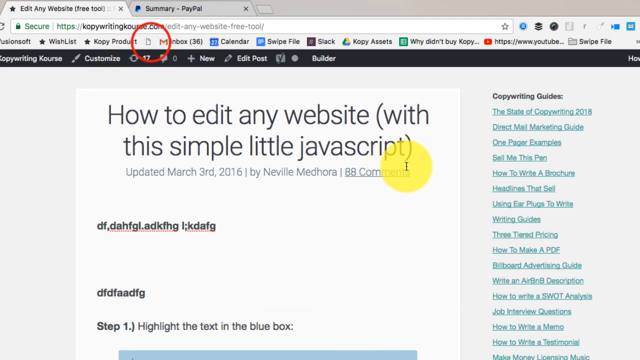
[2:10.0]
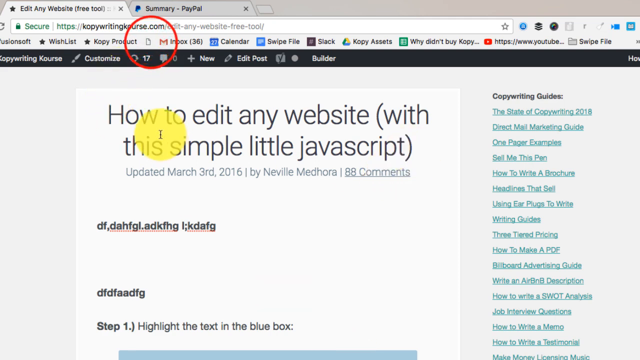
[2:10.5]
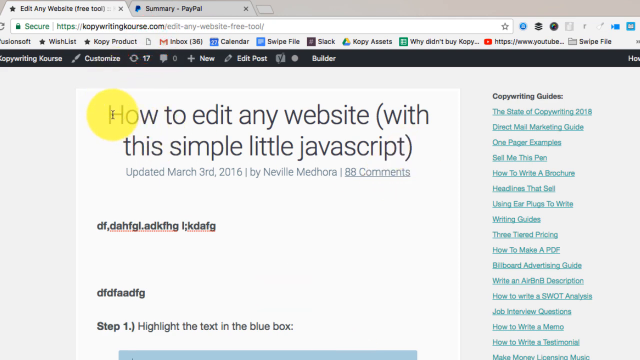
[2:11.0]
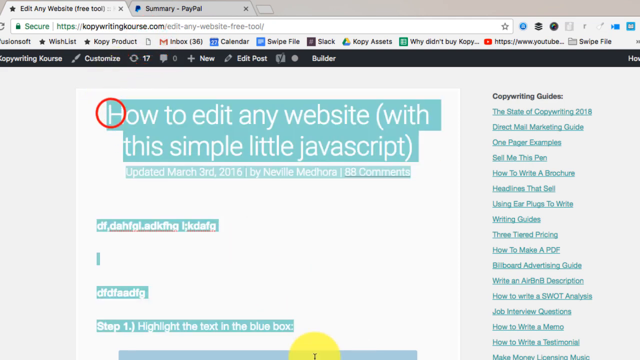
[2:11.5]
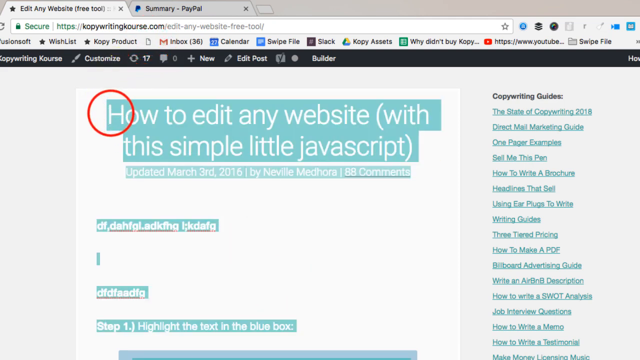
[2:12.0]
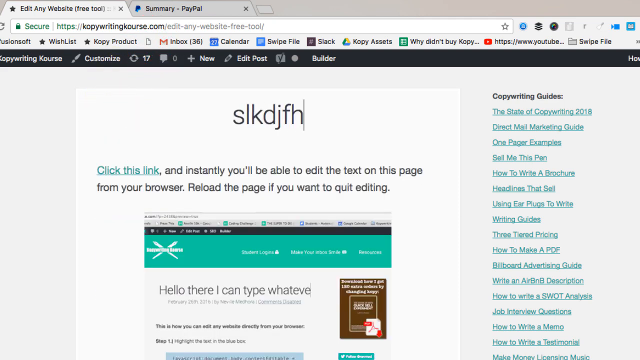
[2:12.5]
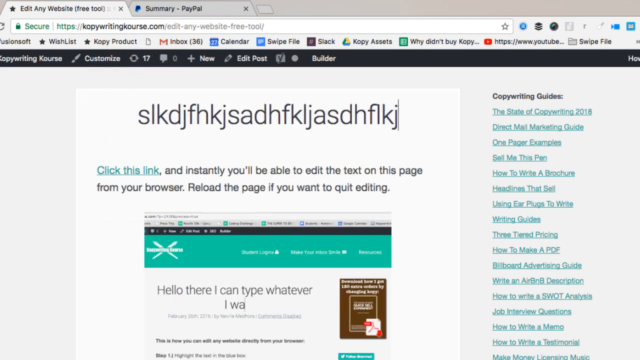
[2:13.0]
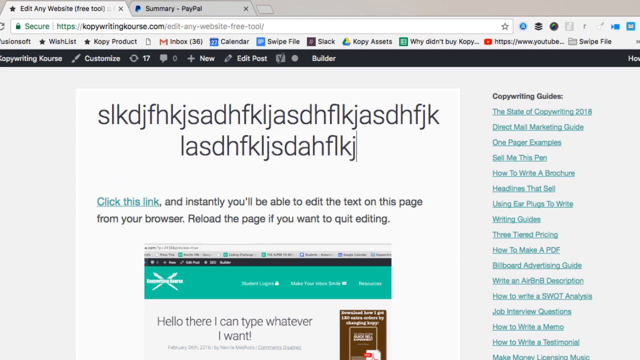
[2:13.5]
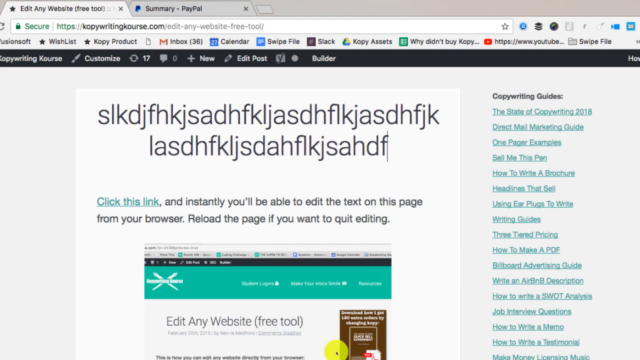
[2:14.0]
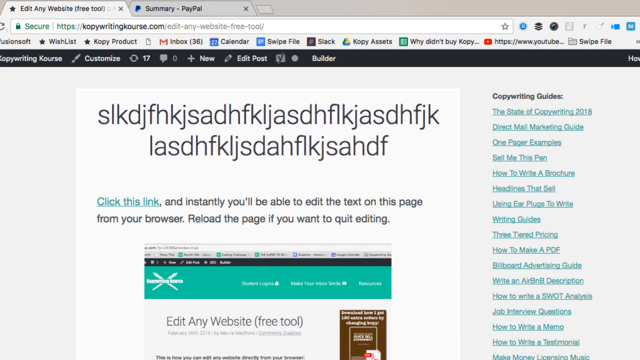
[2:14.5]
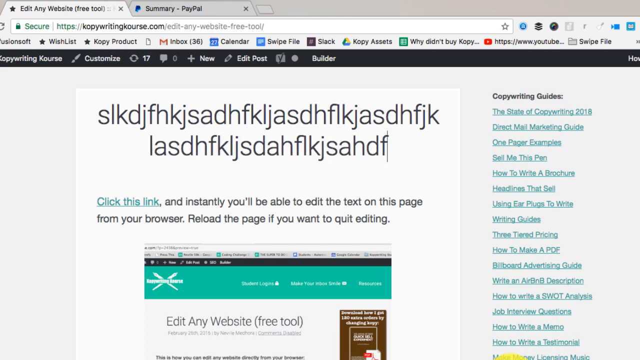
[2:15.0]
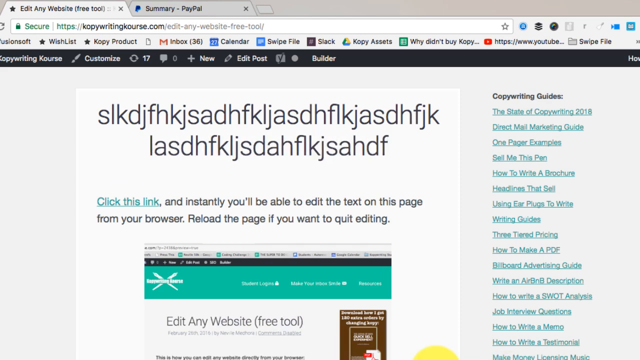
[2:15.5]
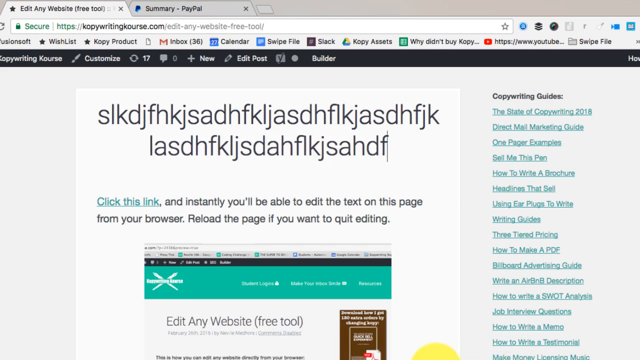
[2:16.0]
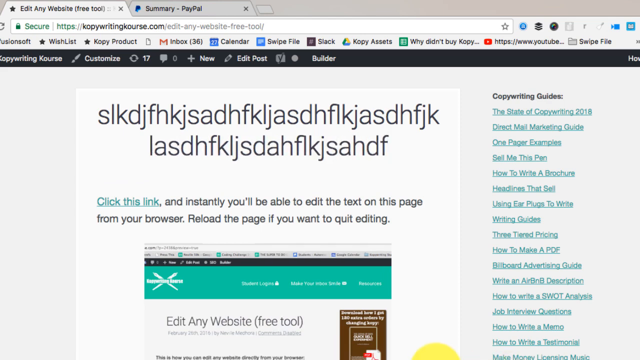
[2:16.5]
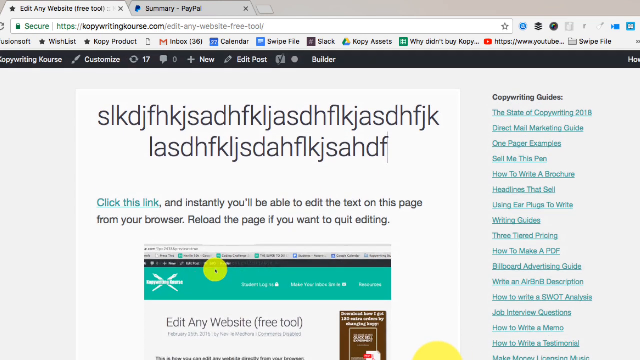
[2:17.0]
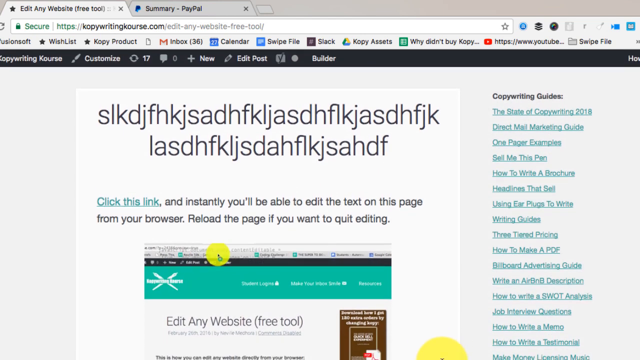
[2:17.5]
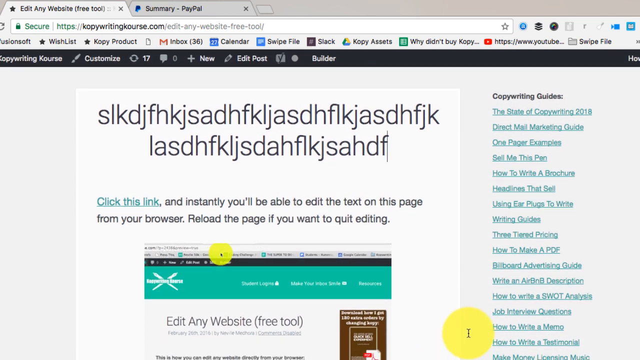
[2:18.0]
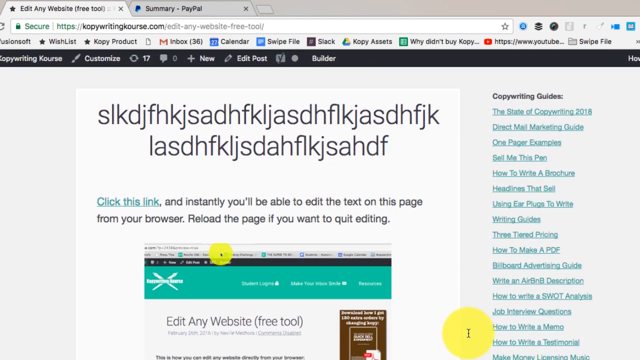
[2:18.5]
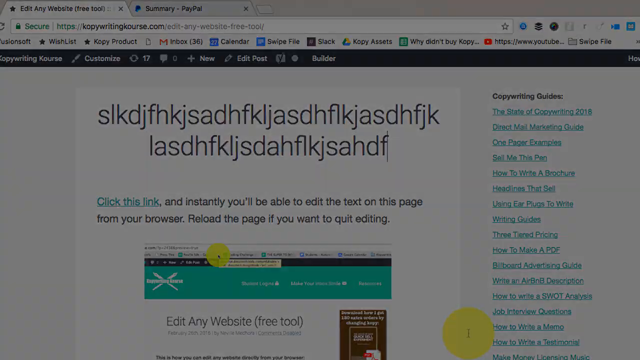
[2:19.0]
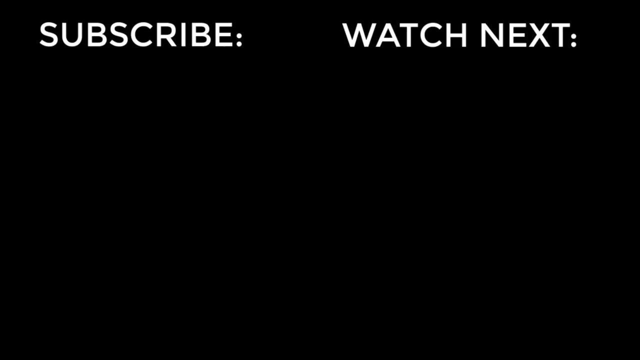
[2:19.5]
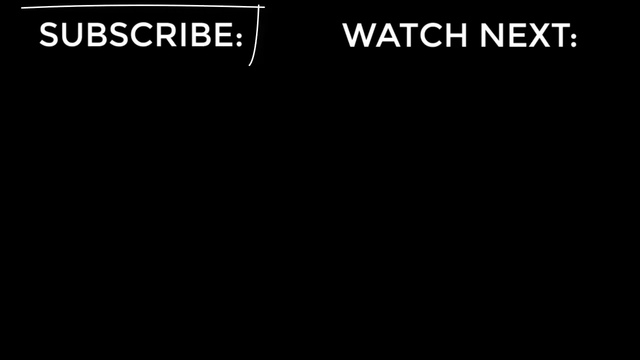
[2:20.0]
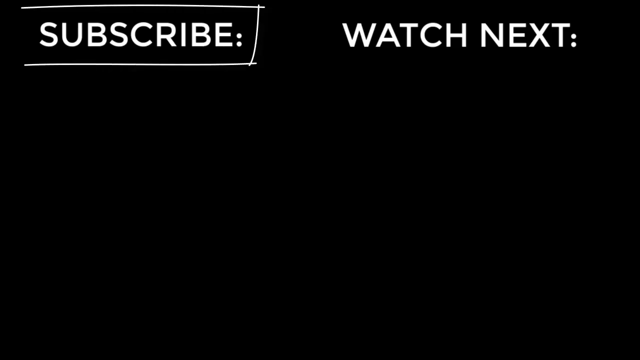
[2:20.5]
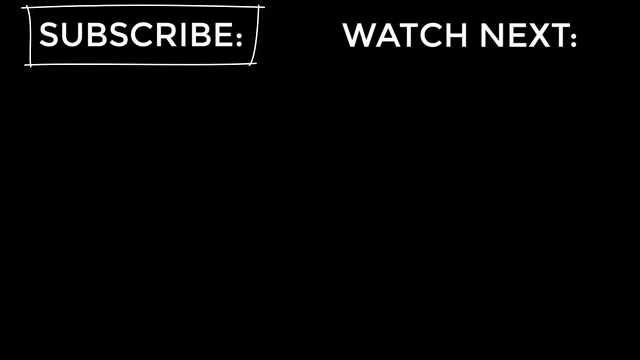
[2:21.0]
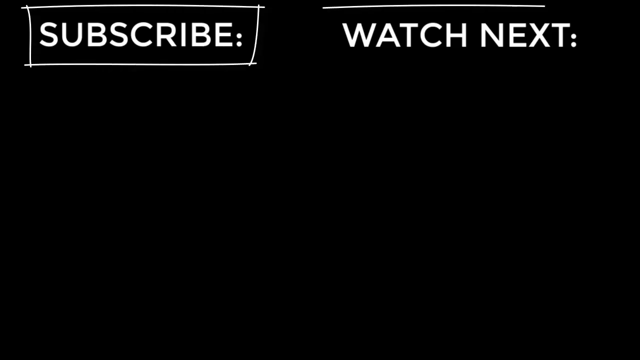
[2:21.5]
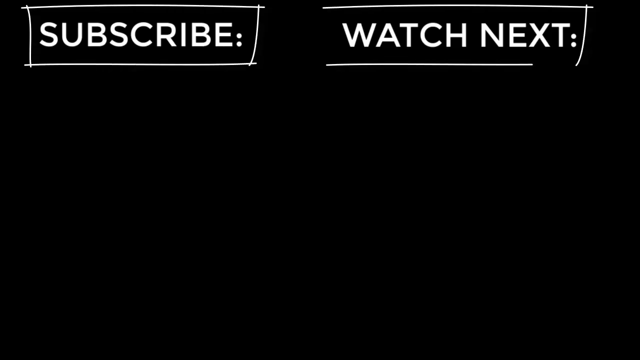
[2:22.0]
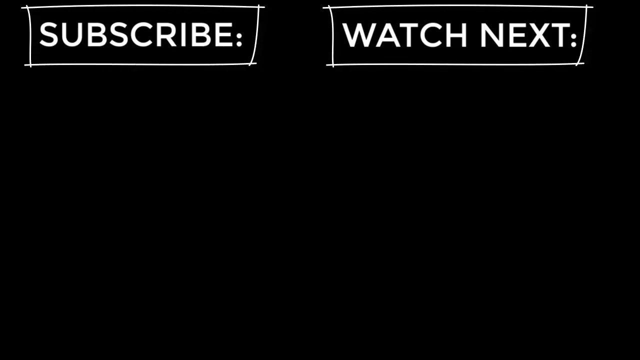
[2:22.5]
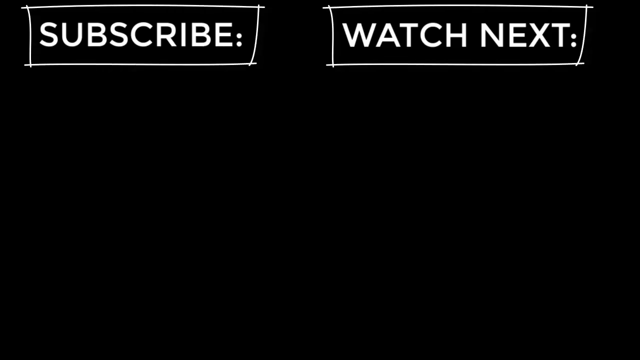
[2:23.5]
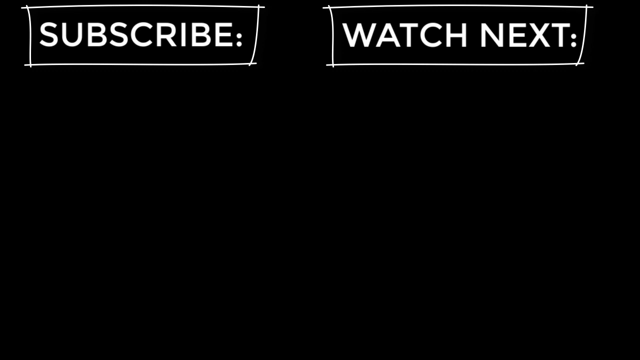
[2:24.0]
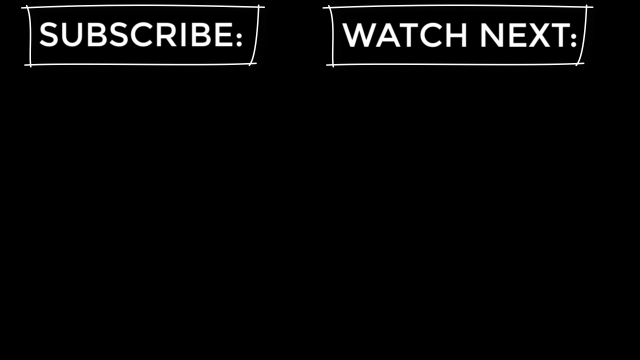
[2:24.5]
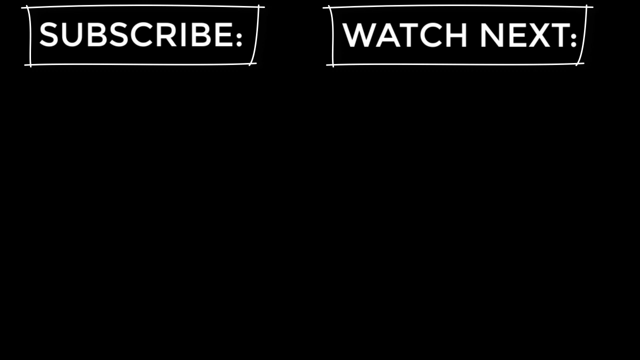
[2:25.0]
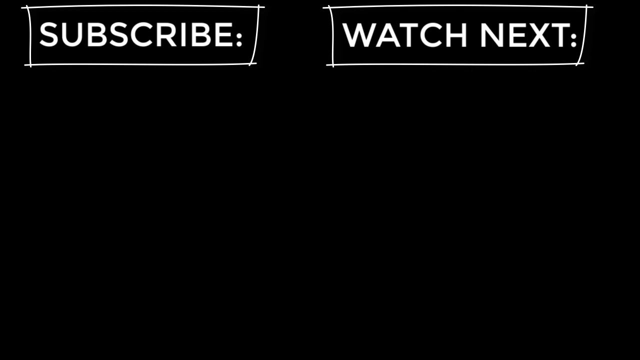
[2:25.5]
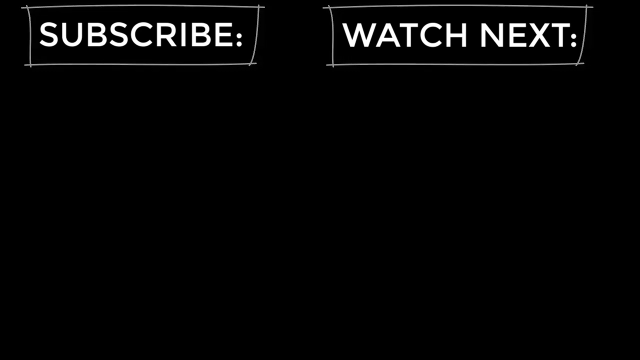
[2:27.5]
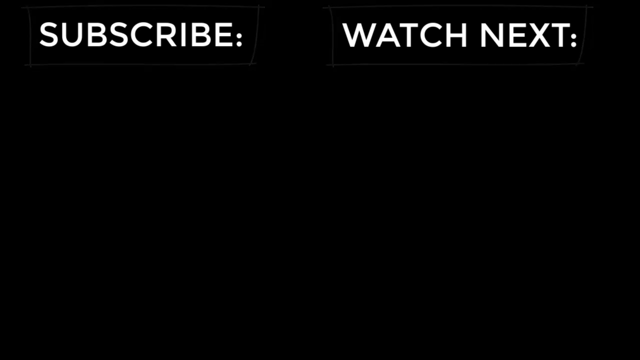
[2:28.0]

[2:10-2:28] A computer screen is open to a web page titled "Edit Any Website Free Tool." In the toolbar at the top of the page is a red circle around the page icon, and below it is a text box with "How to edit any website with this simple little Javascript" typed in it. A yellow cursor highlights all the text in the white box, and a red circle appears above the text. Everything at the top of the page then changes to nonsense letters, and below it is text that says "Click this link and instantly you'll be able to edit the text on this page from your browser. Reload the page if you want to quit editing." The cursor moves down again, and then the page goes black, with the word "Subscribe" appearing in the upper left corner and "Watch Next" in the upper right corner.